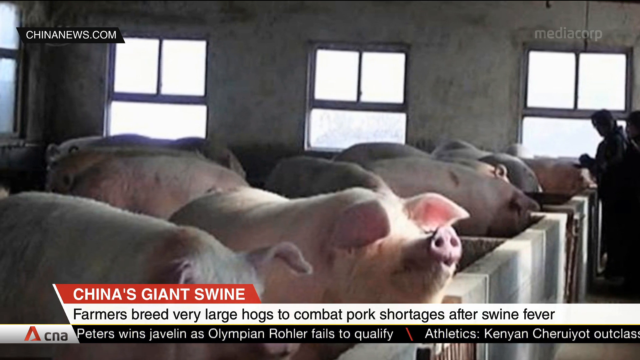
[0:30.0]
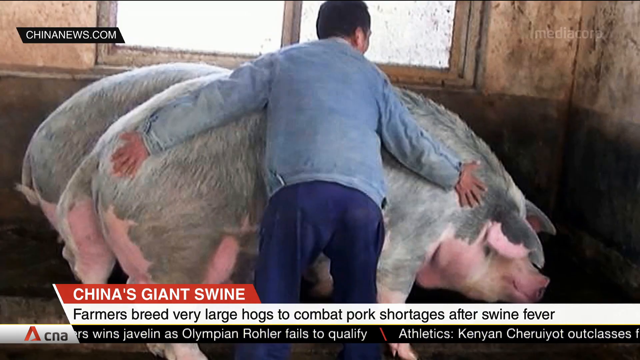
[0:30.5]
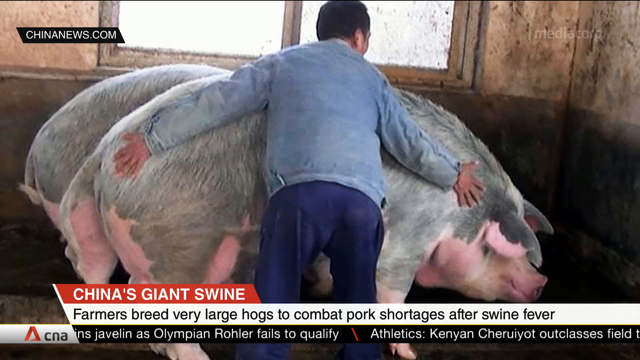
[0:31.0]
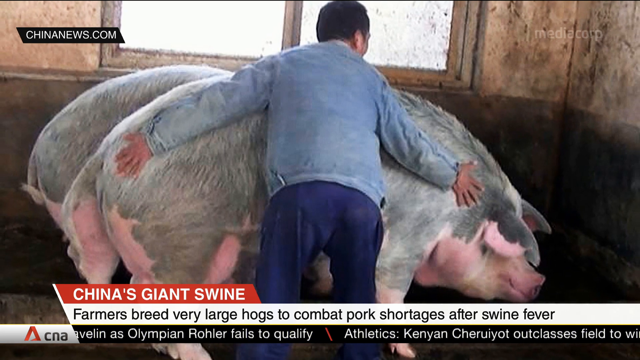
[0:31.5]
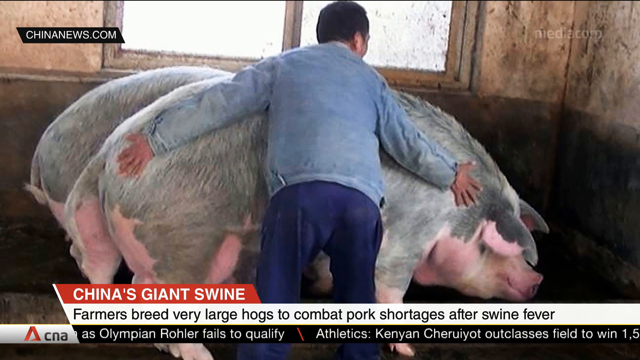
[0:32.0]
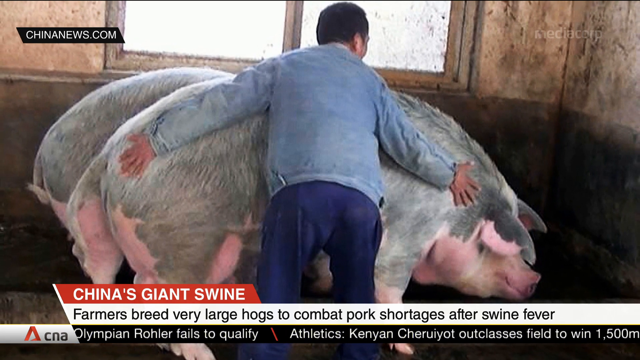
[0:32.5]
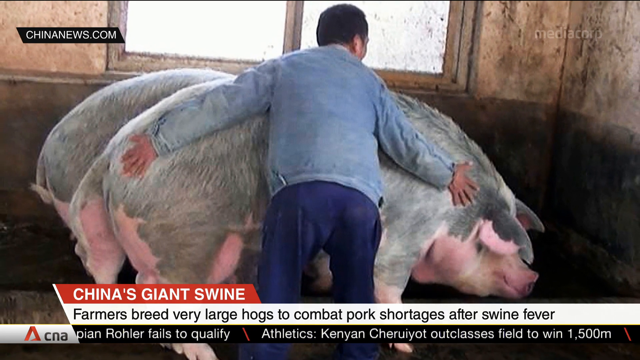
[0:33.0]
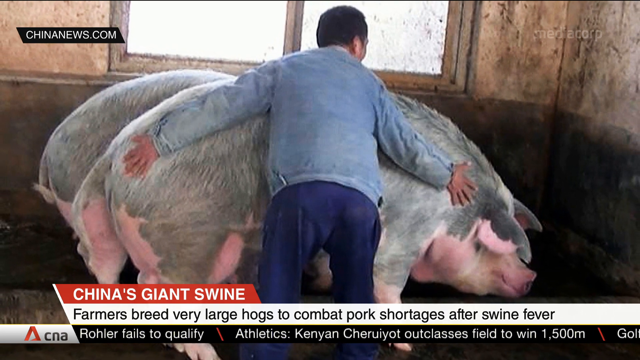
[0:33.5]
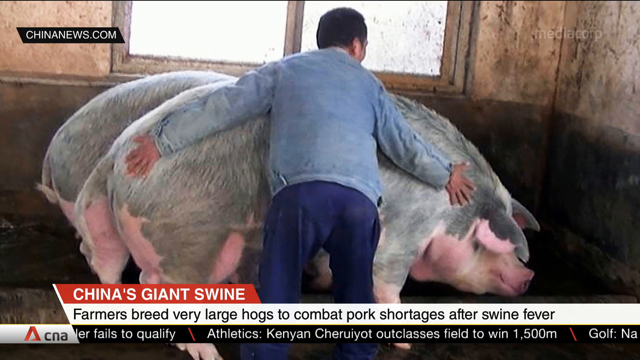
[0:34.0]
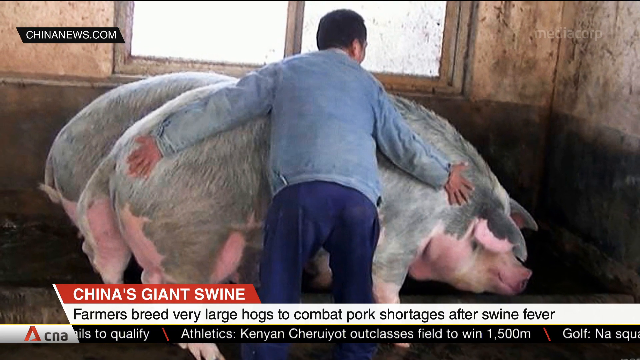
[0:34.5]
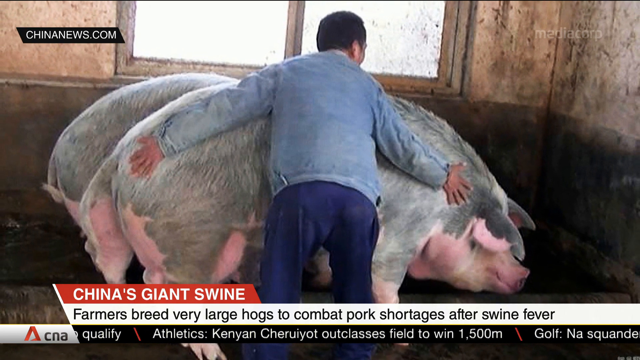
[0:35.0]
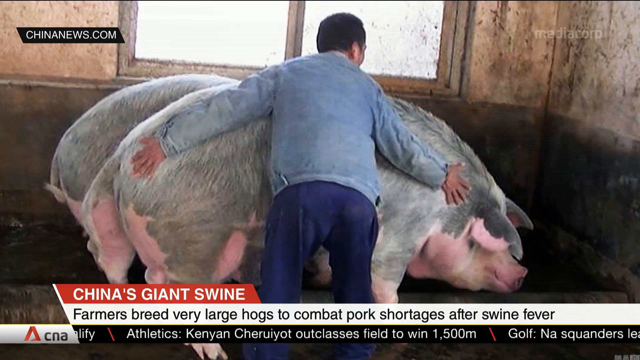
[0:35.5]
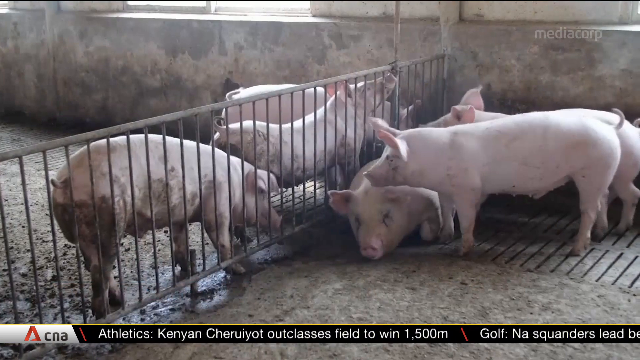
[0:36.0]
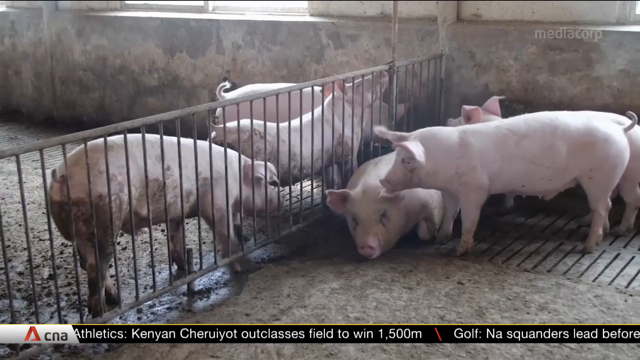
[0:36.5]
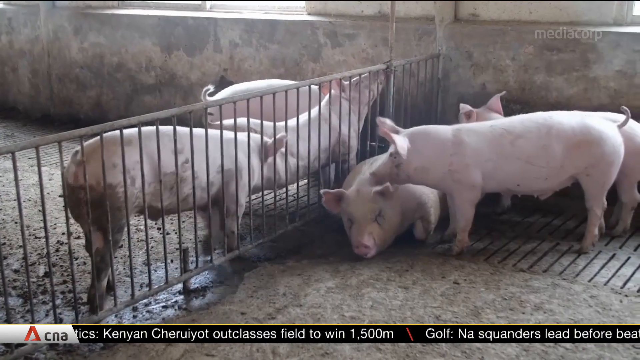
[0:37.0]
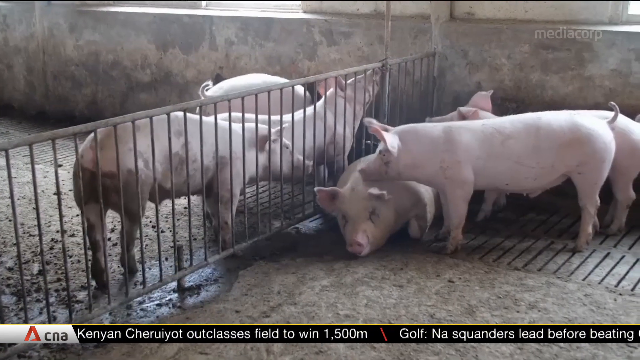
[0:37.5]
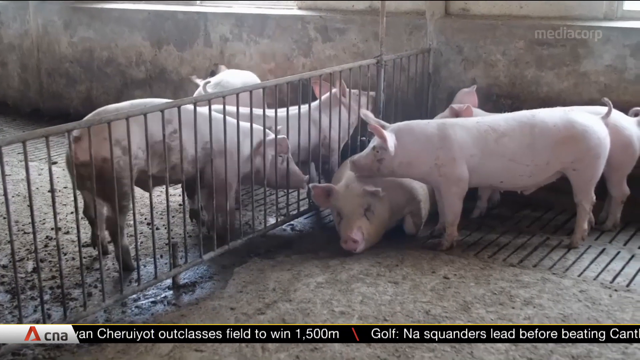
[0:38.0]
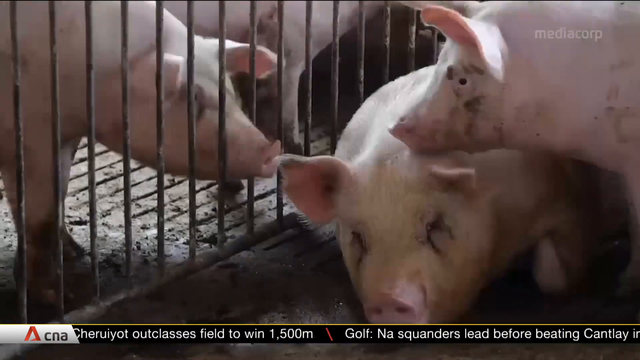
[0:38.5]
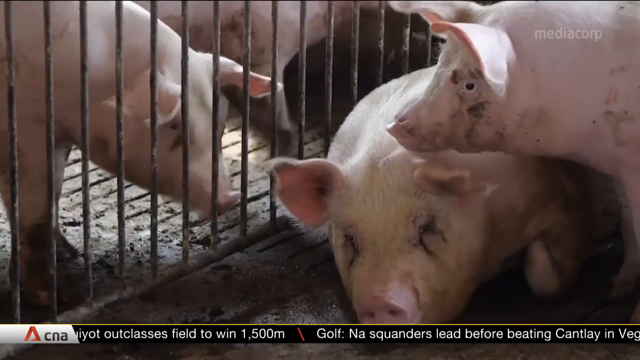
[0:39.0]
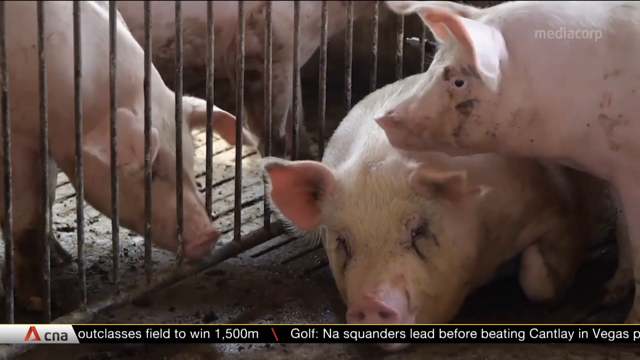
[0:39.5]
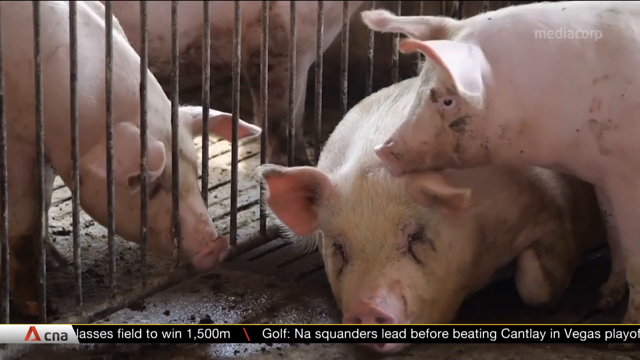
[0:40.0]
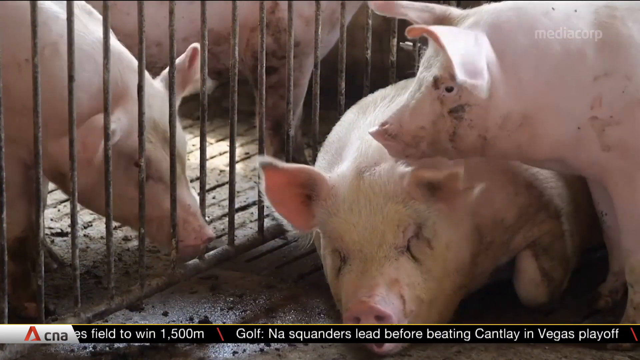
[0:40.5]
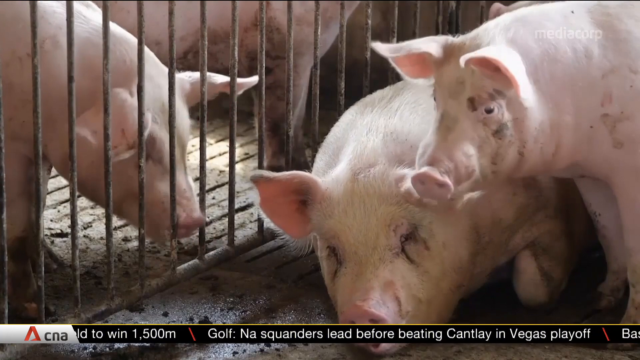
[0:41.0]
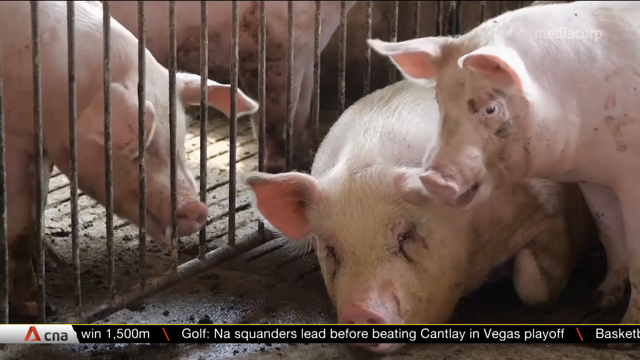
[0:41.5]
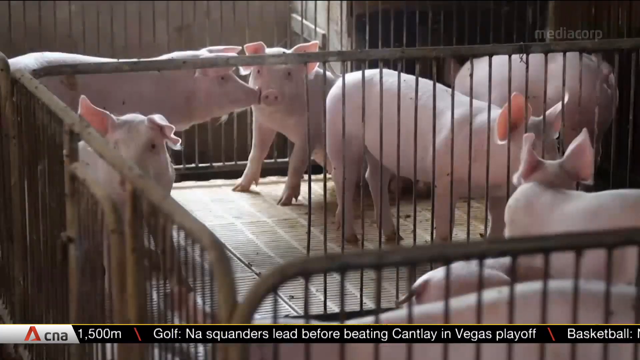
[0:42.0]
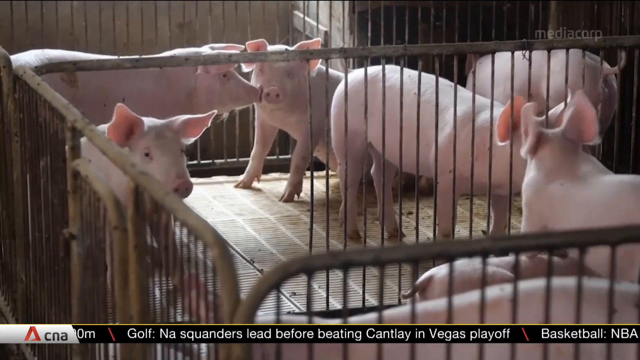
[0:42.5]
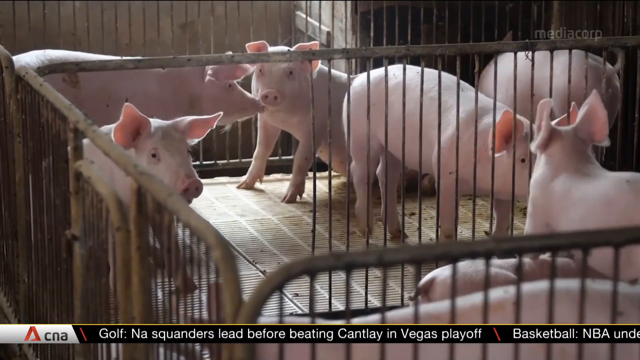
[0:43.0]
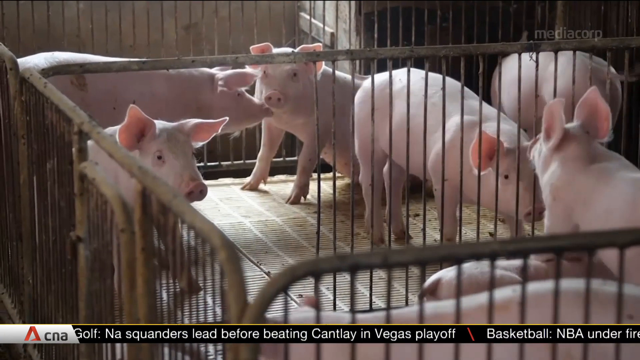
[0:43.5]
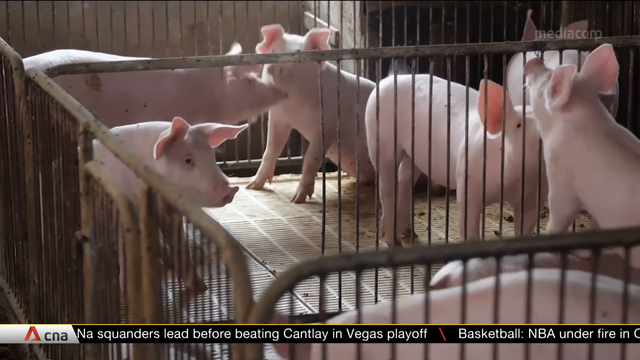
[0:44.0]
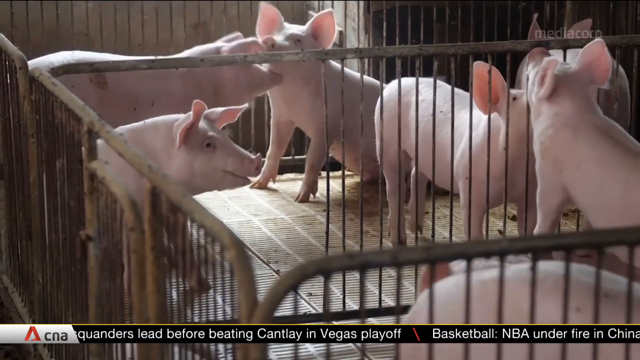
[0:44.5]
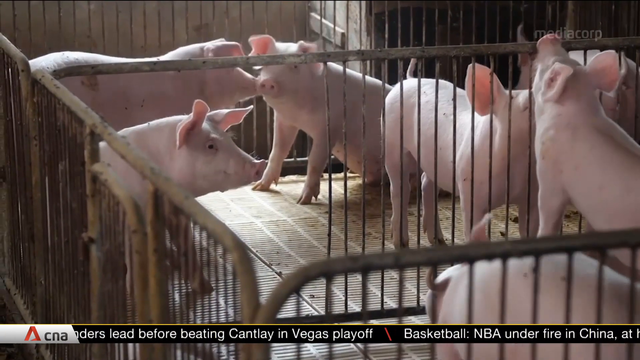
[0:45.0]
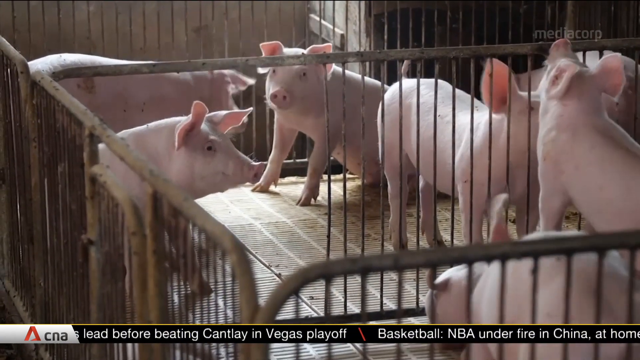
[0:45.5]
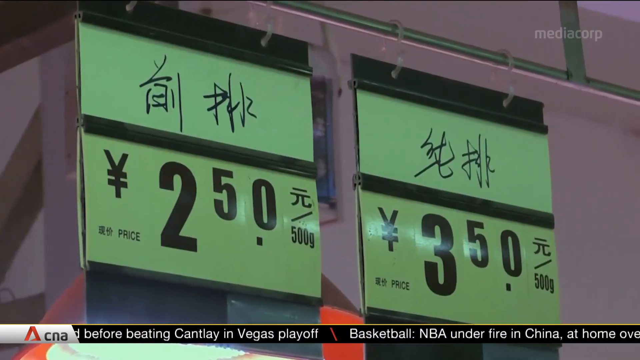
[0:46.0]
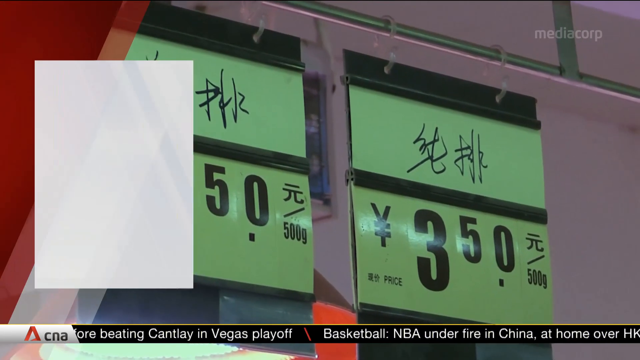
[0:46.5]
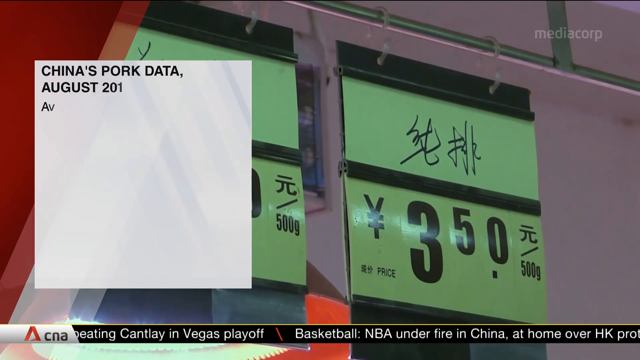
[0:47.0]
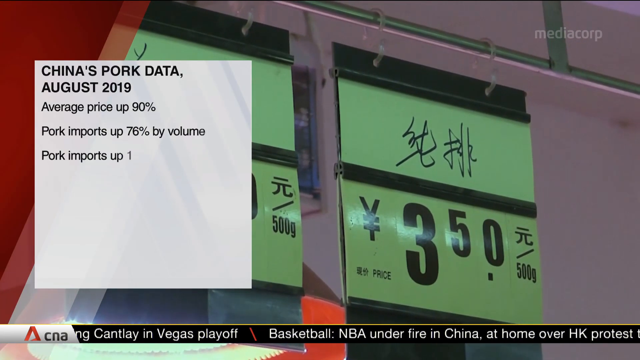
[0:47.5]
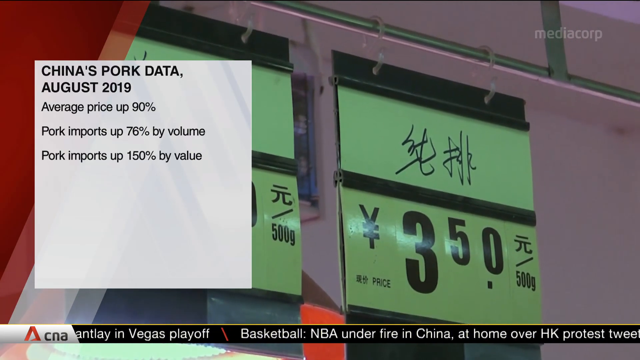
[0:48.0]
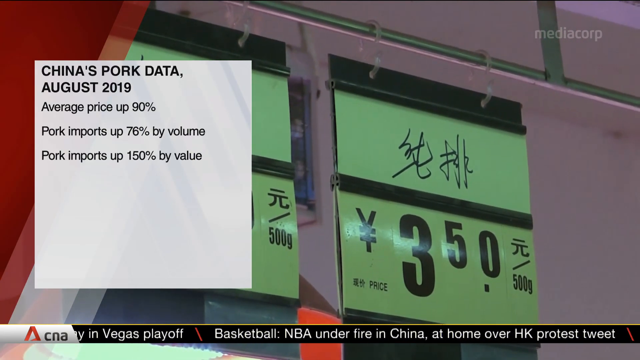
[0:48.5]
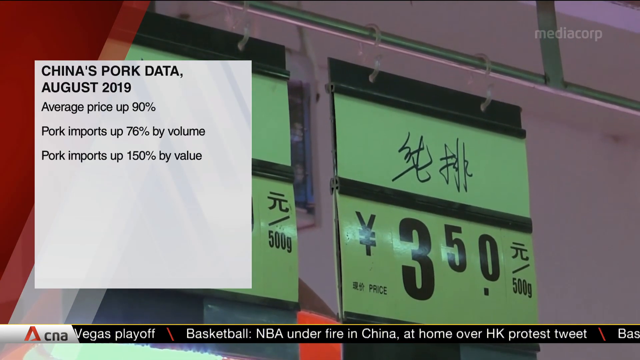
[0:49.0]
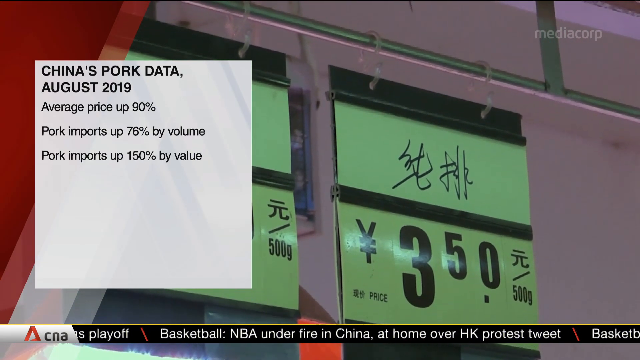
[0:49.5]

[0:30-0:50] Some of the pigs are clean and others are dirty, and they are kept in different places. A nice pig appears with babies. A picture shows "350" and "250" in red. People are visible who seem to be cleaning the pigs or are in a room, though it is not clear. A small, pretty pig is shown, along with the text "China pork data". One pig looks ugly, while another is clean.